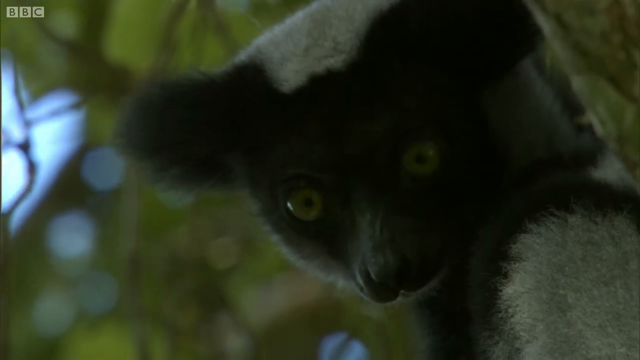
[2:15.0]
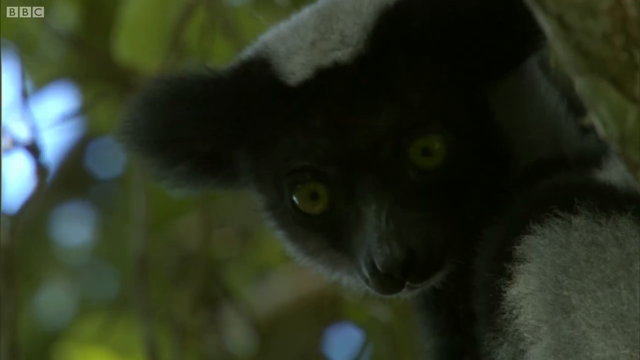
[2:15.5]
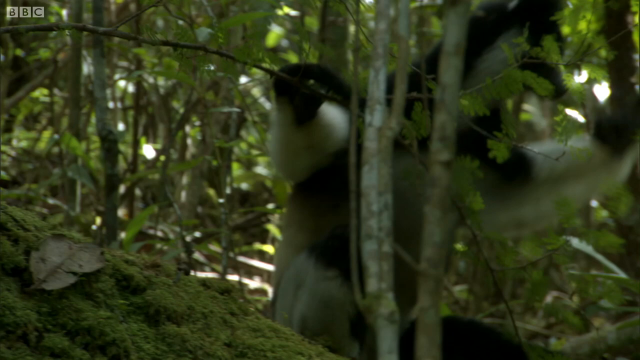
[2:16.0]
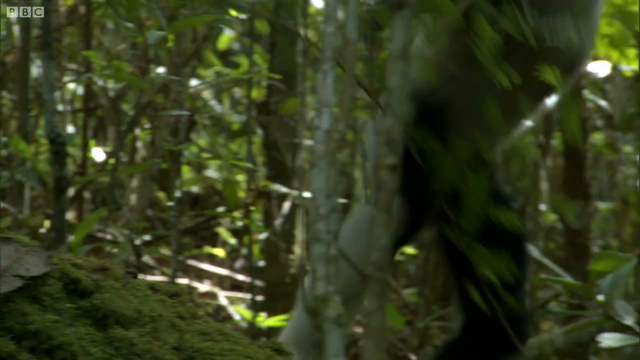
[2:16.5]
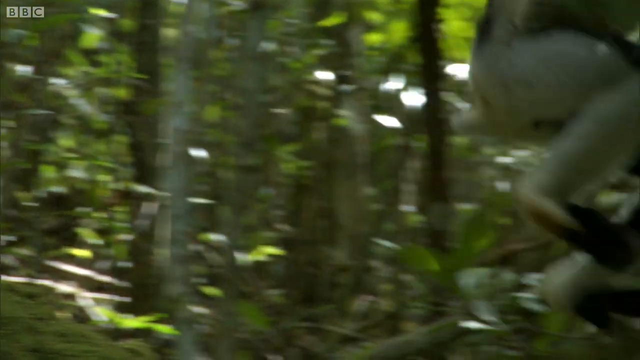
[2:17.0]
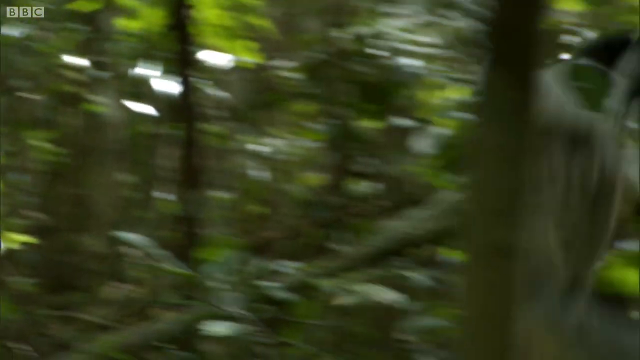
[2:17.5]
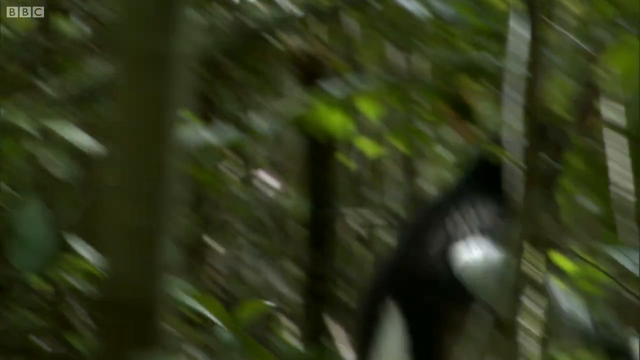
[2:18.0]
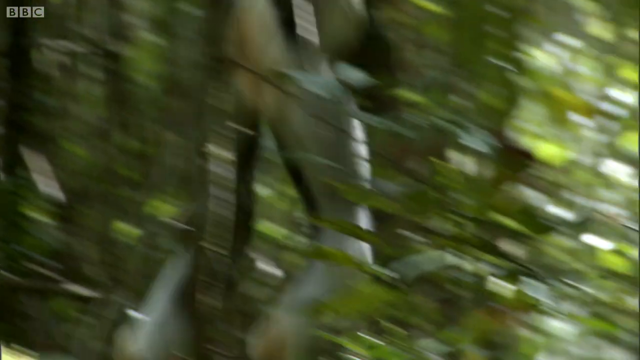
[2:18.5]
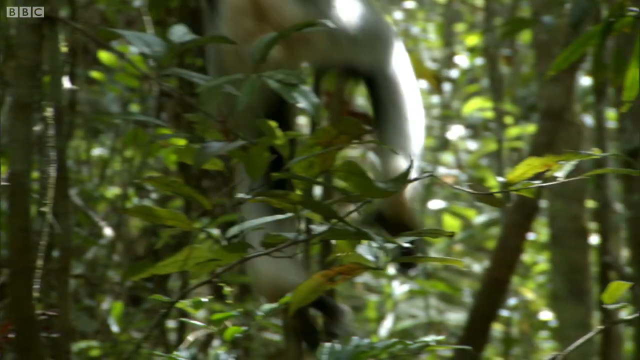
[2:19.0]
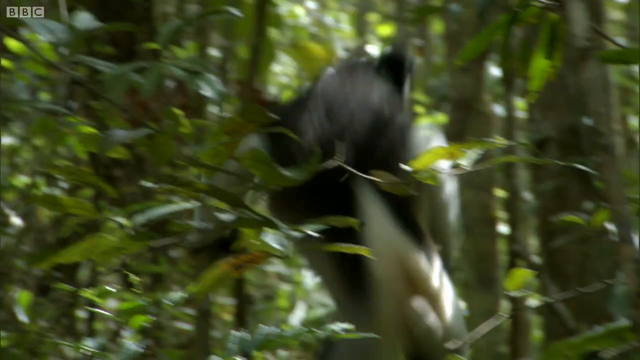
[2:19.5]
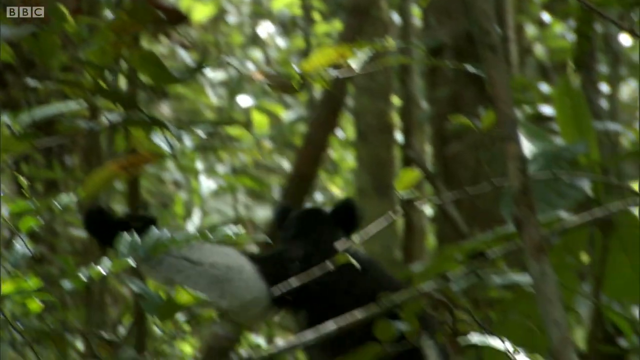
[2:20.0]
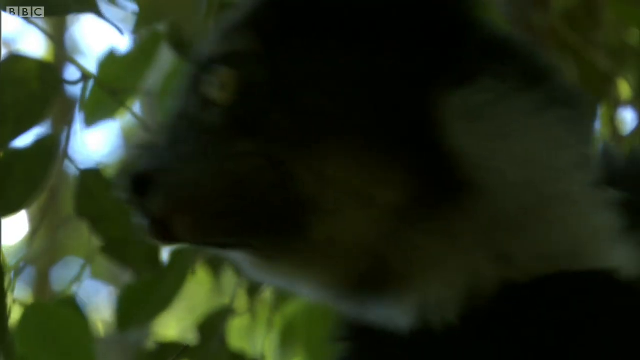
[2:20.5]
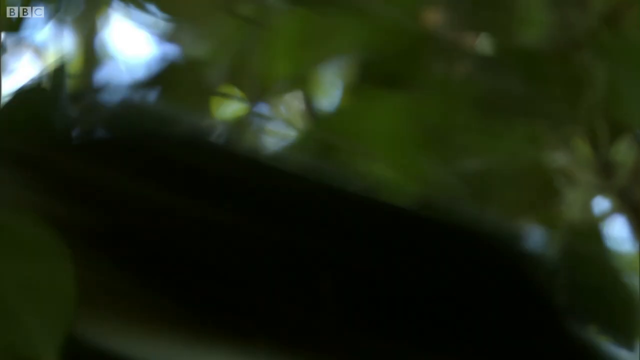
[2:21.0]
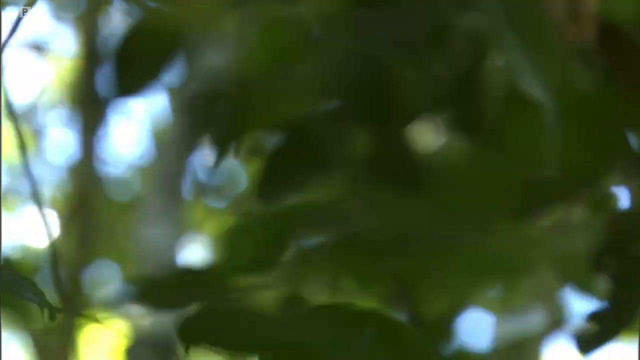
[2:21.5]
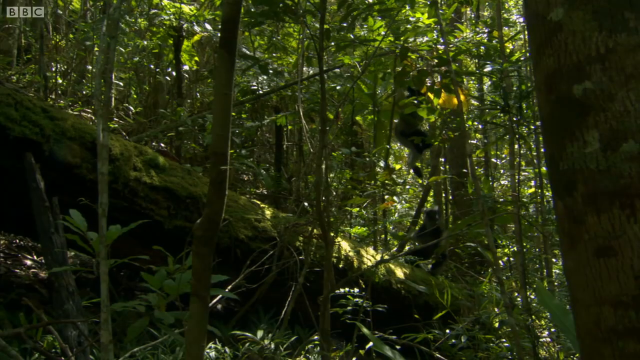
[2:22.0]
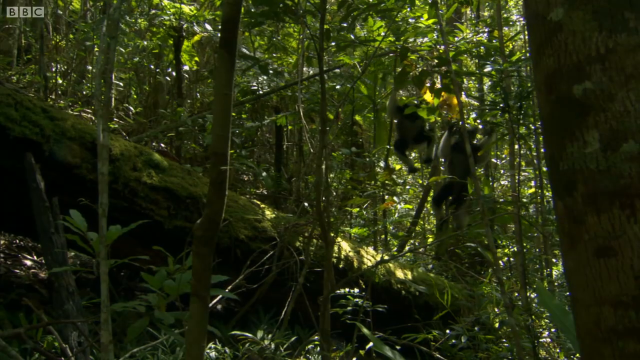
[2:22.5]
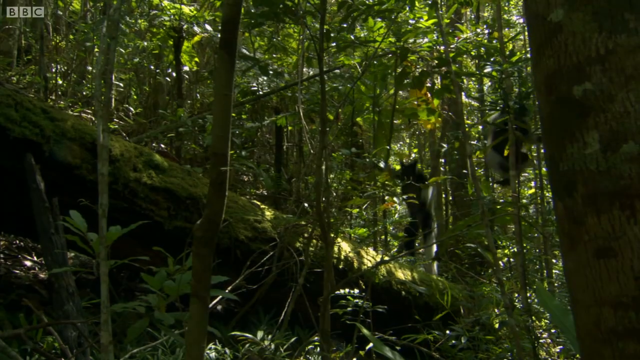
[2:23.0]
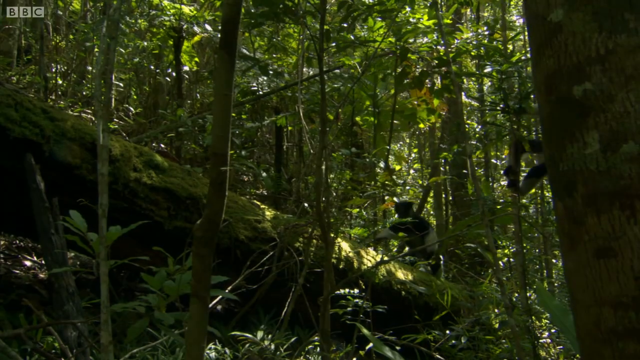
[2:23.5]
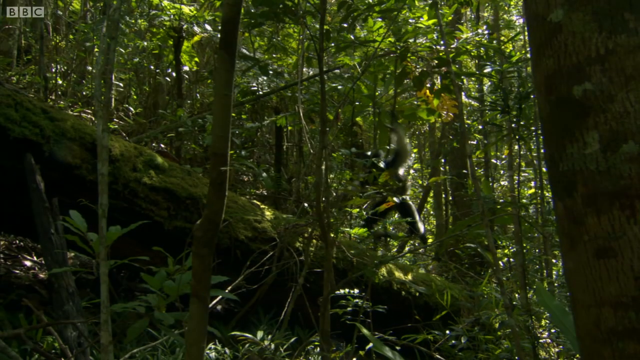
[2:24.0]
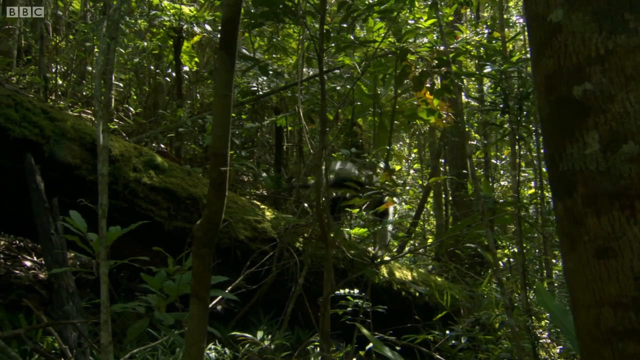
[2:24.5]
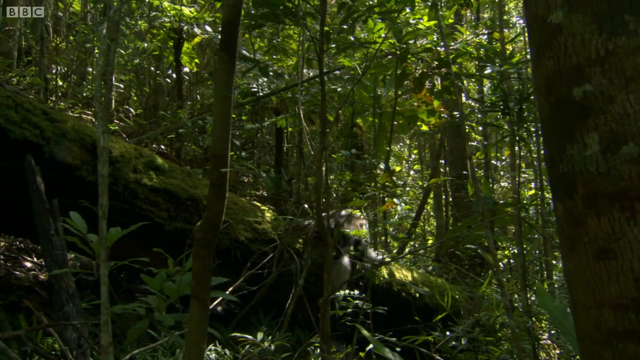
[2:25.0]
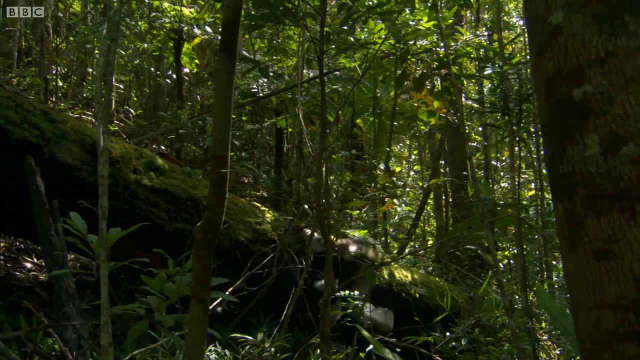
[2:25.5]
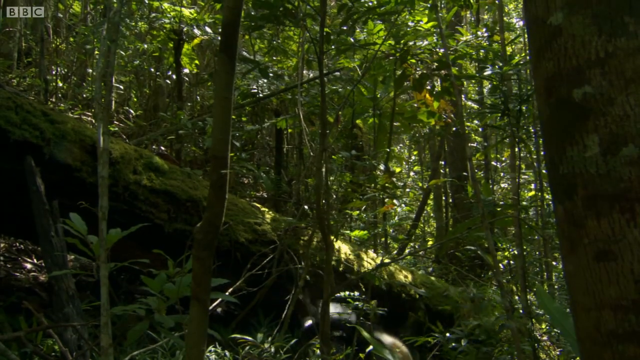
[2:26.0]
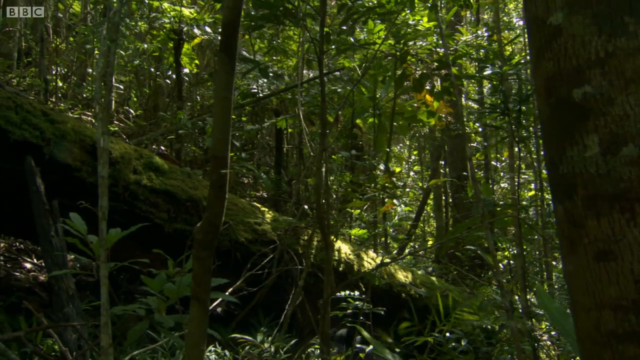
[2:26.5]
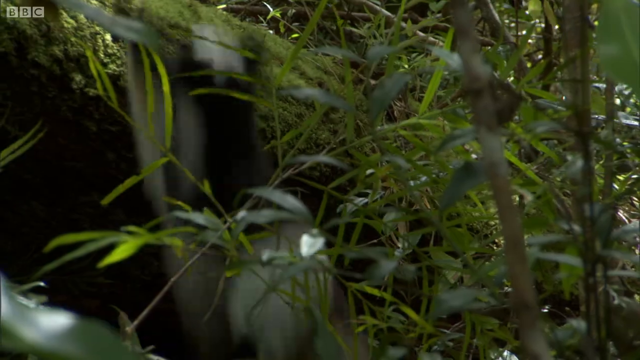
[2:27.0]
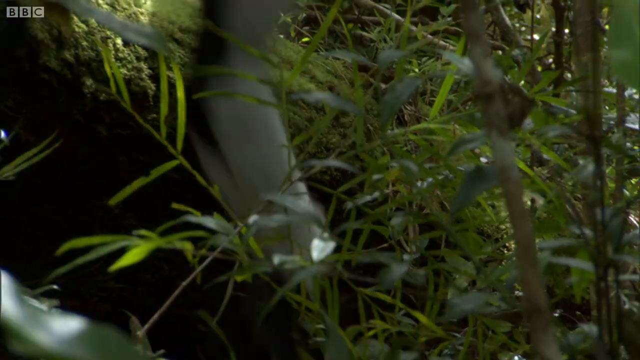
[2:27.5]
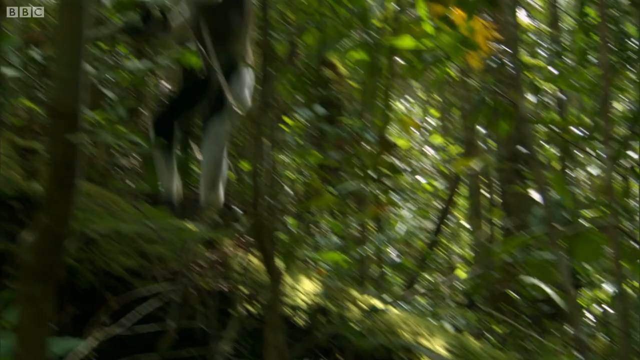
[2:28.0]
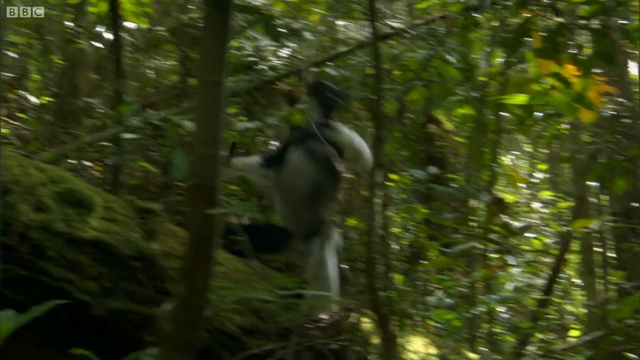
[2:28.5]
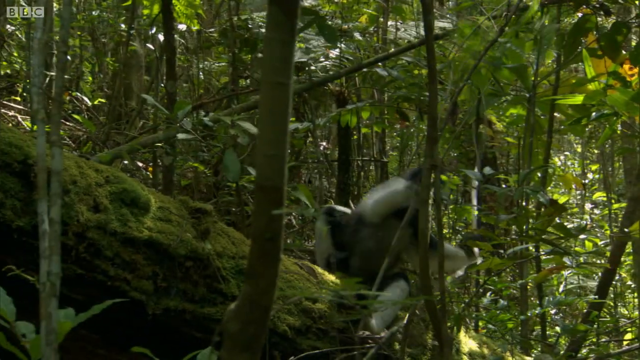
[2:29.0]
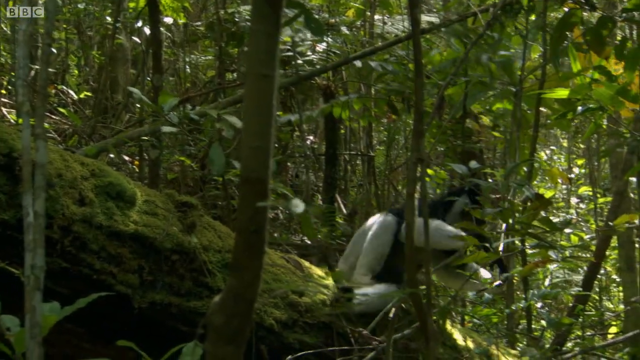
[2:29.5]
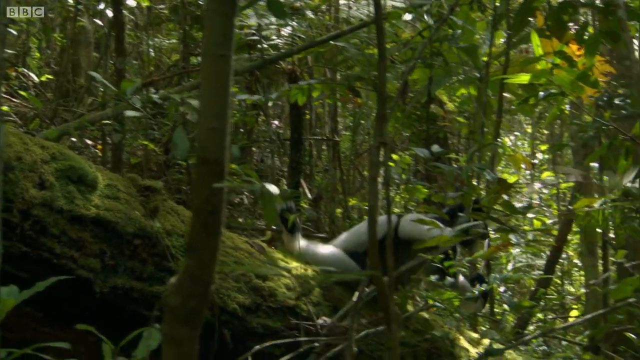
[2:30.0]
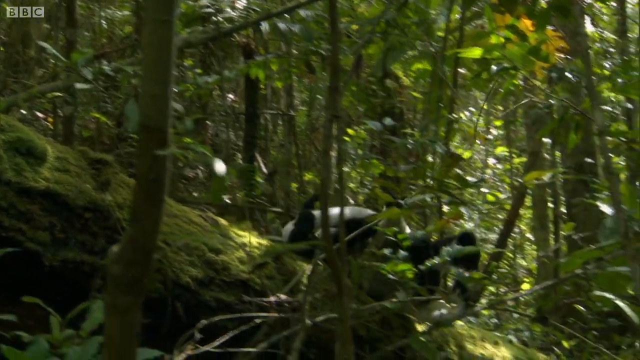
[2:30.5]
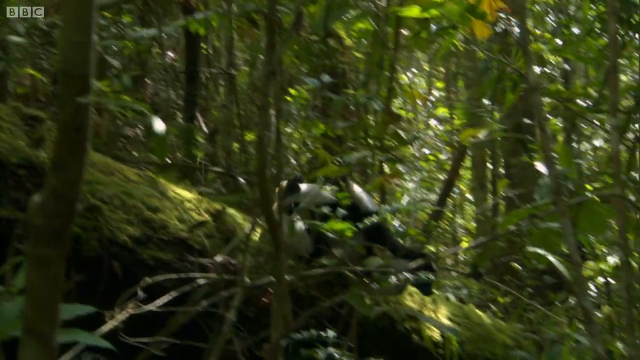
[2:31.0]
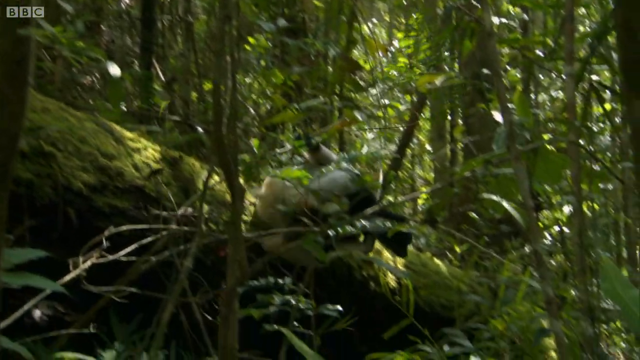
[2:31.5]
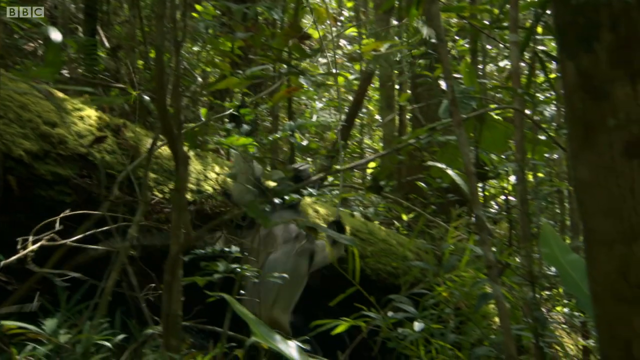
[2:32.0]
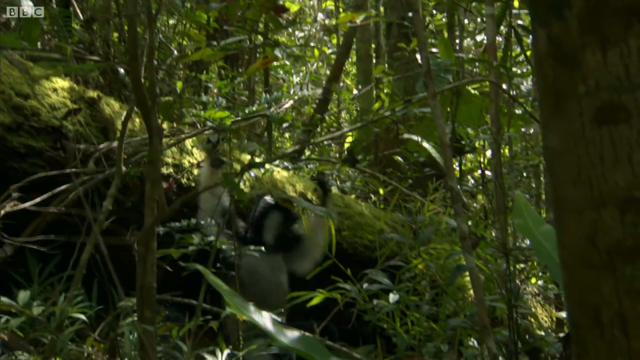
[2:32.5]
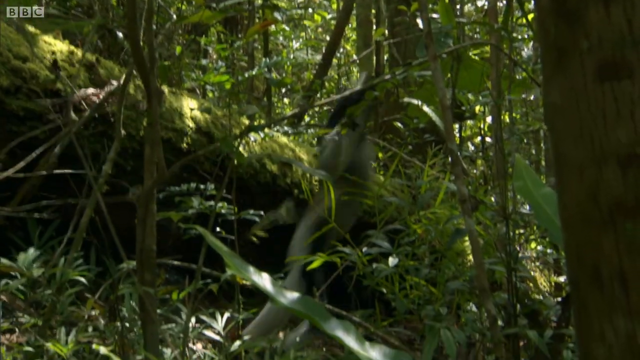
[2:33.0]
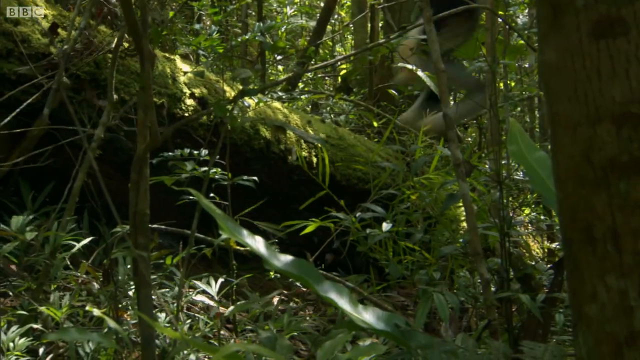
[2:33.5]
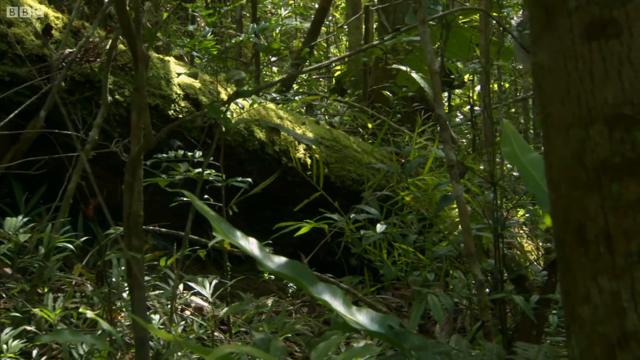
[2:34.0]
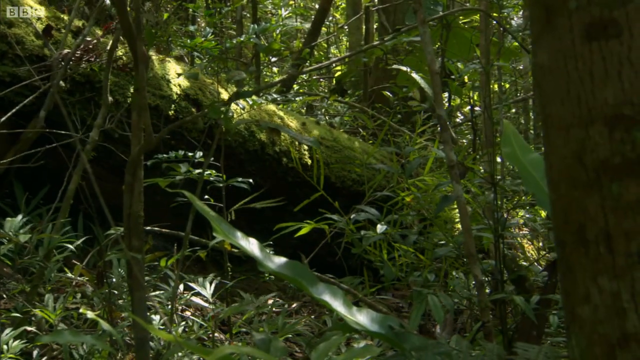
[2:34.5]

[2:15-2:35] A close-up shows a lemur's face, seemingly watching. A farther view shows a lemur, possibly a second lemur, jumping across the forest floor. The two lemurs are then seen together, jumping and grabbing onto different branches and leaping back and forth through the green forest. Moss-covered logs lie along the forest floor; the lemurs jump on top of them and, in between, grab onto branches and vines, kind of playing among the trees. They seem very playful, jumping and playing almost as if in a trampoline park, grabbing branches to keep from falling as they keep leaping through the dense green vegetation.